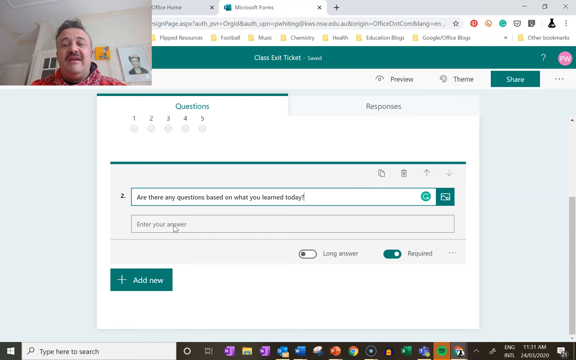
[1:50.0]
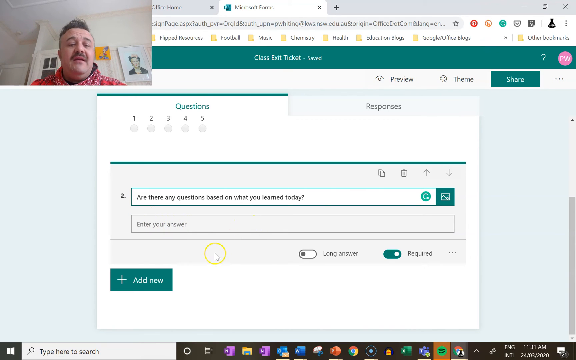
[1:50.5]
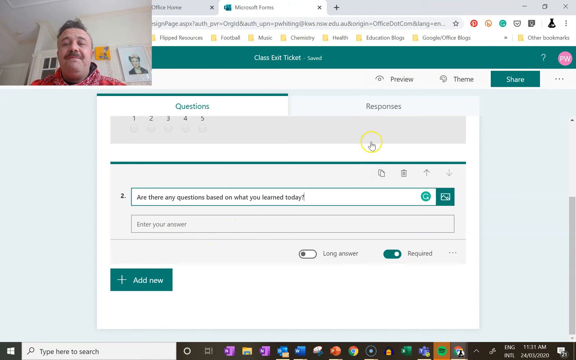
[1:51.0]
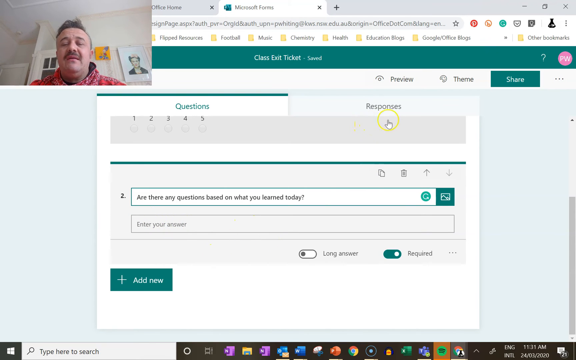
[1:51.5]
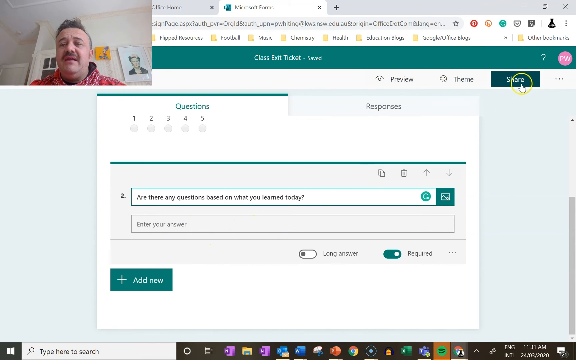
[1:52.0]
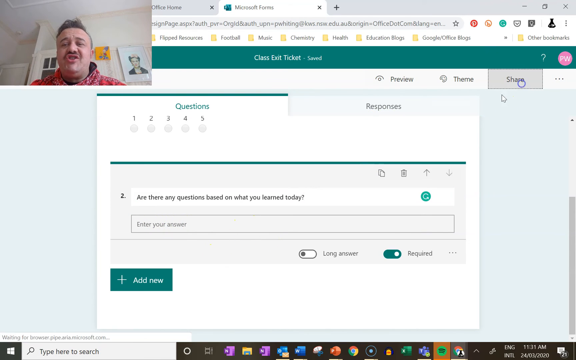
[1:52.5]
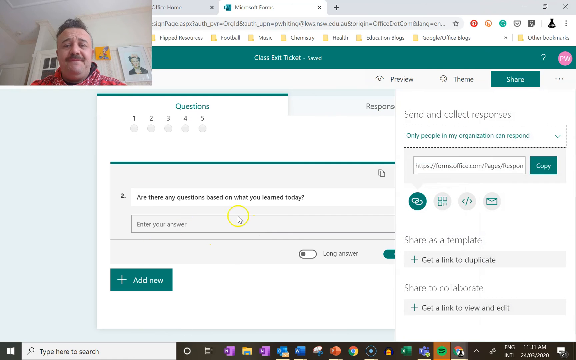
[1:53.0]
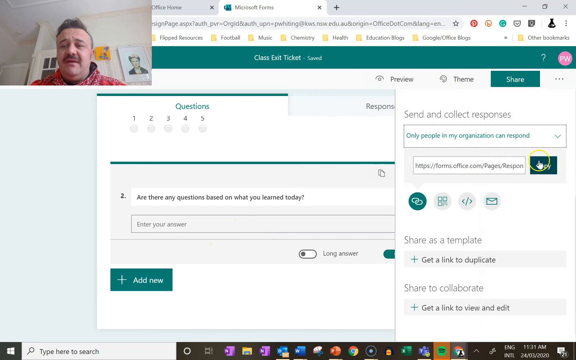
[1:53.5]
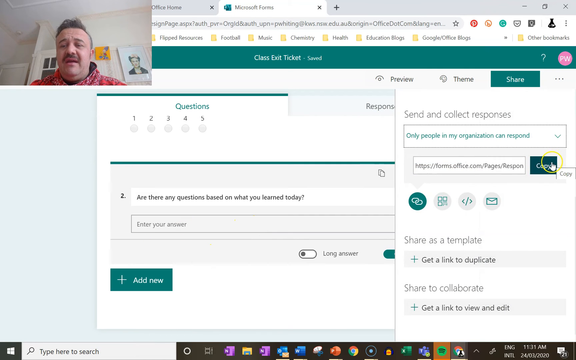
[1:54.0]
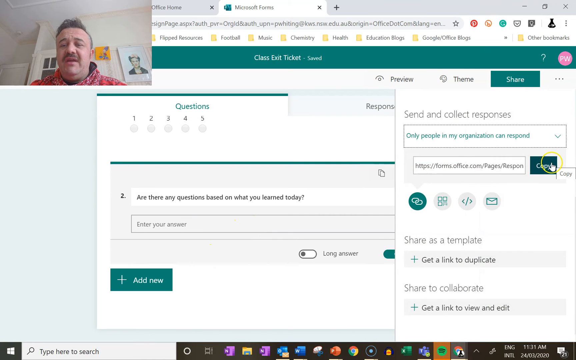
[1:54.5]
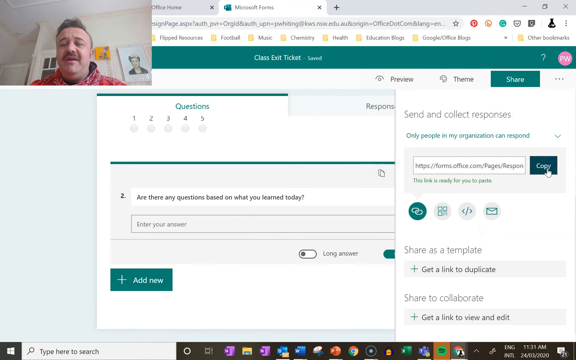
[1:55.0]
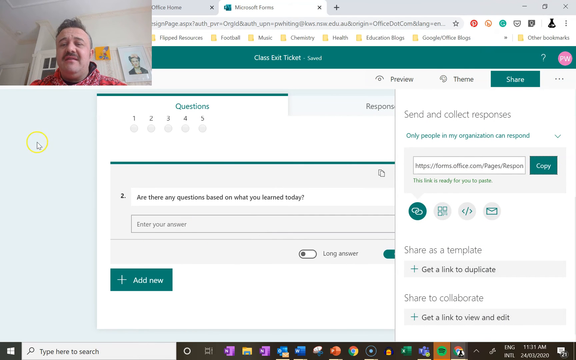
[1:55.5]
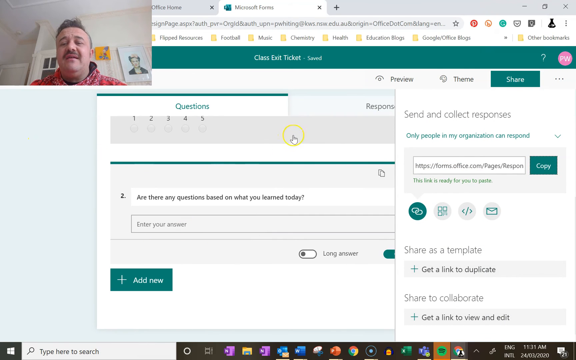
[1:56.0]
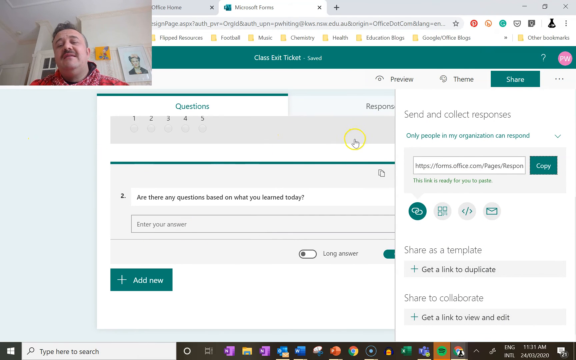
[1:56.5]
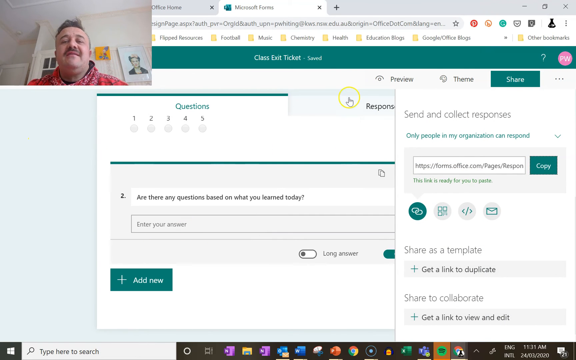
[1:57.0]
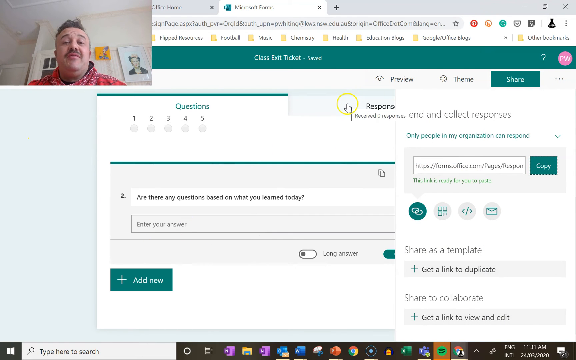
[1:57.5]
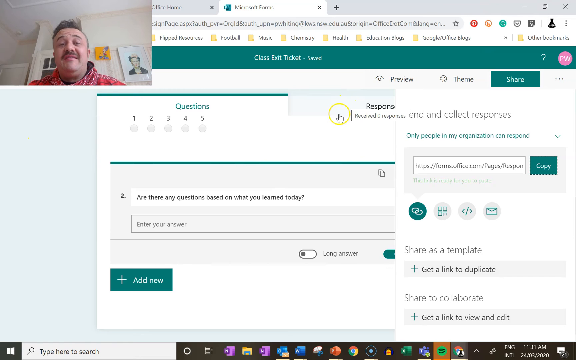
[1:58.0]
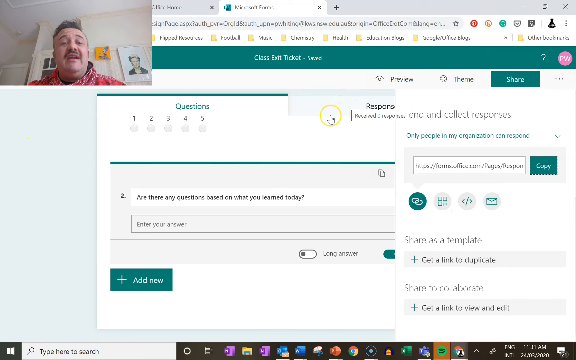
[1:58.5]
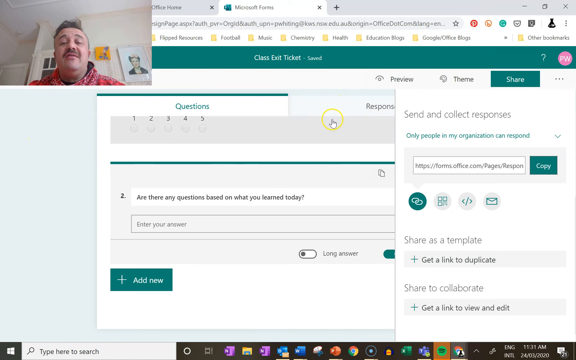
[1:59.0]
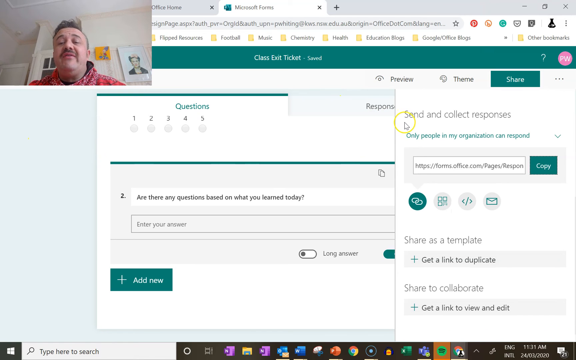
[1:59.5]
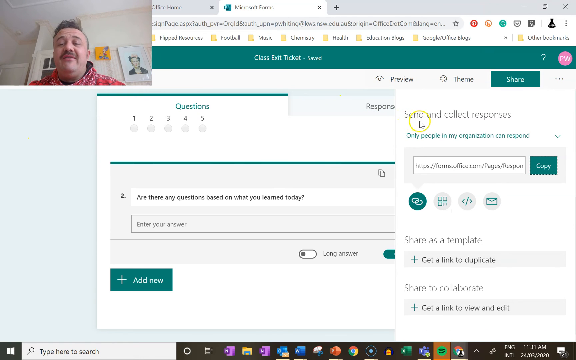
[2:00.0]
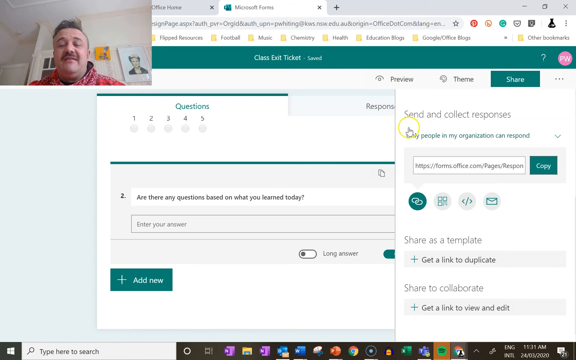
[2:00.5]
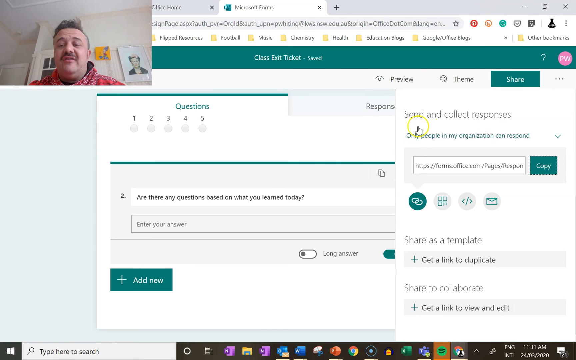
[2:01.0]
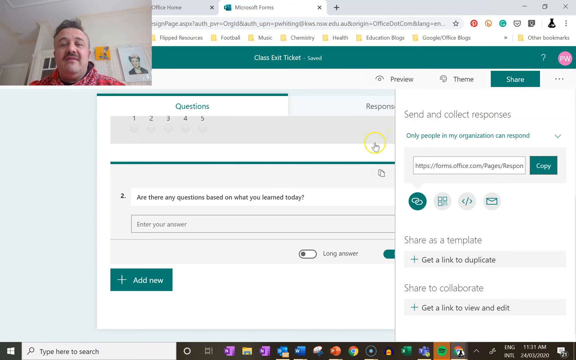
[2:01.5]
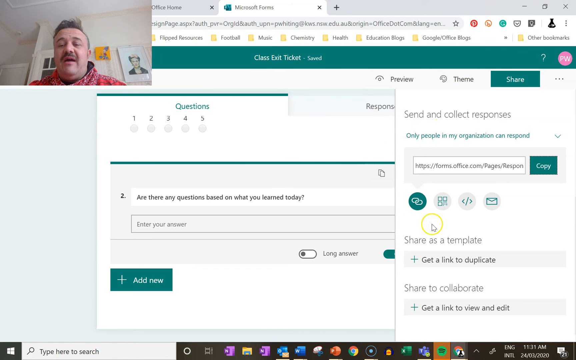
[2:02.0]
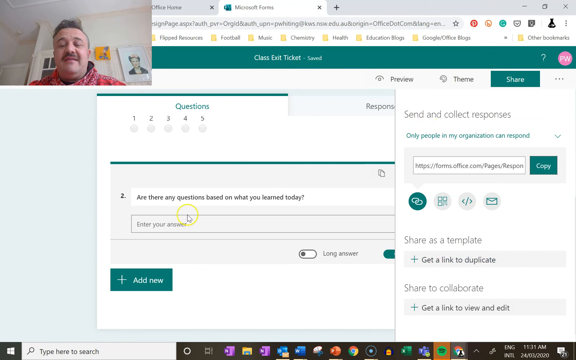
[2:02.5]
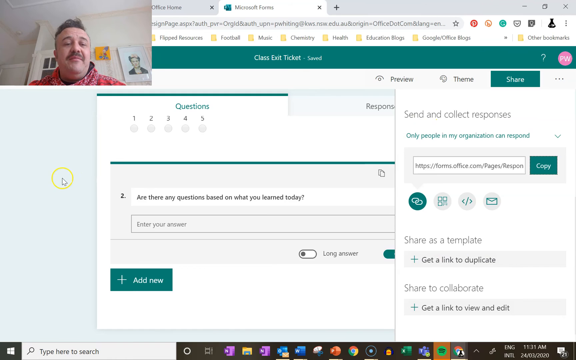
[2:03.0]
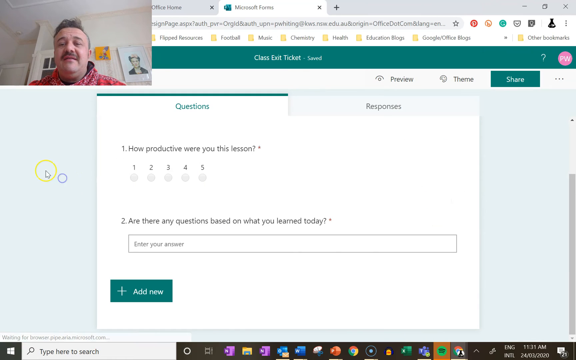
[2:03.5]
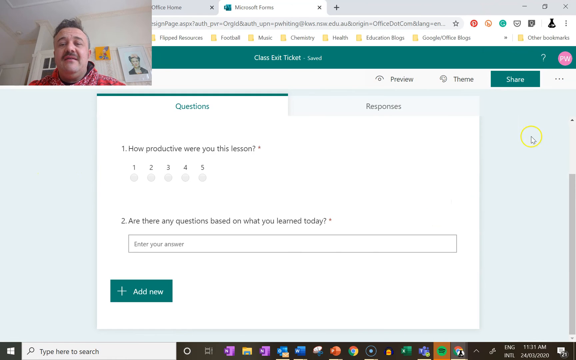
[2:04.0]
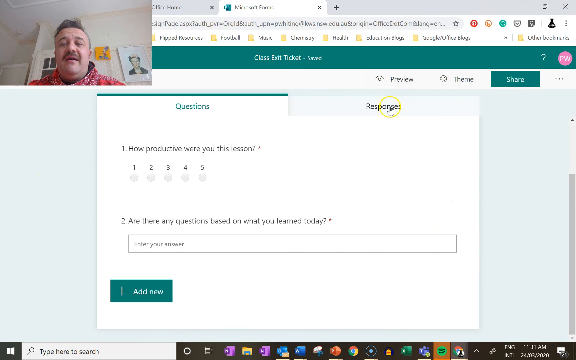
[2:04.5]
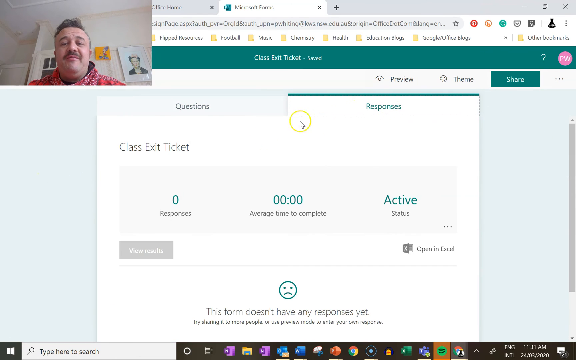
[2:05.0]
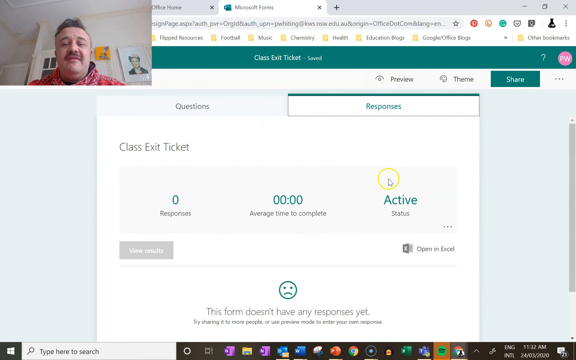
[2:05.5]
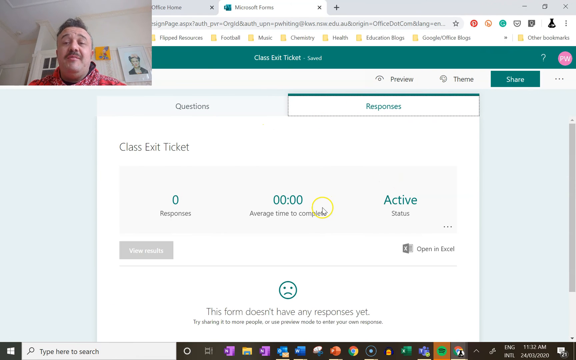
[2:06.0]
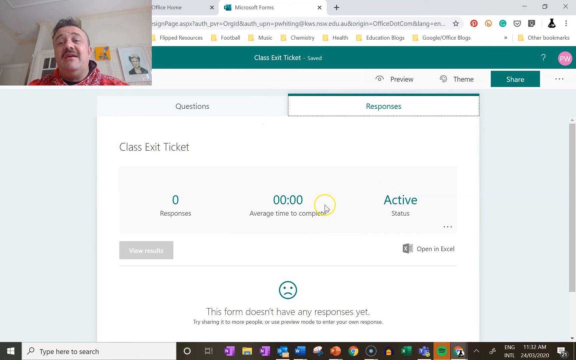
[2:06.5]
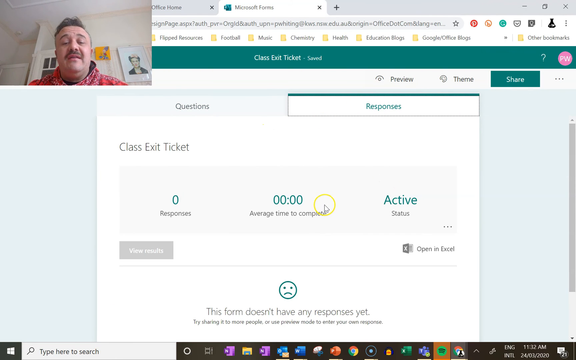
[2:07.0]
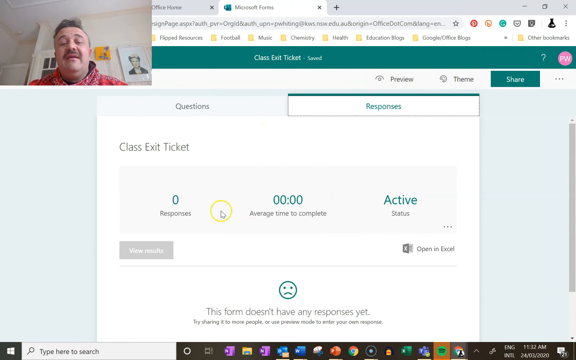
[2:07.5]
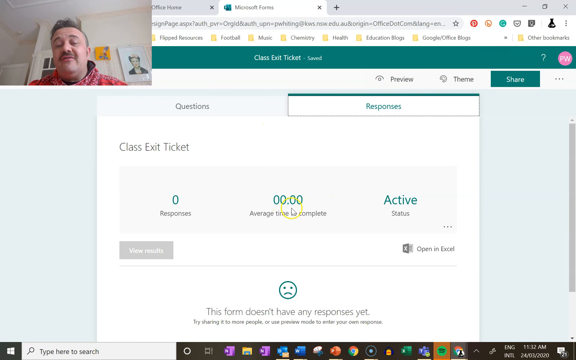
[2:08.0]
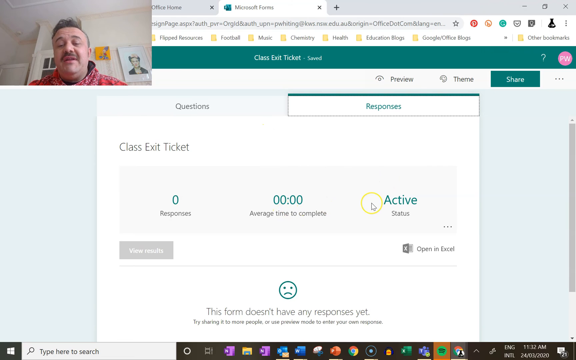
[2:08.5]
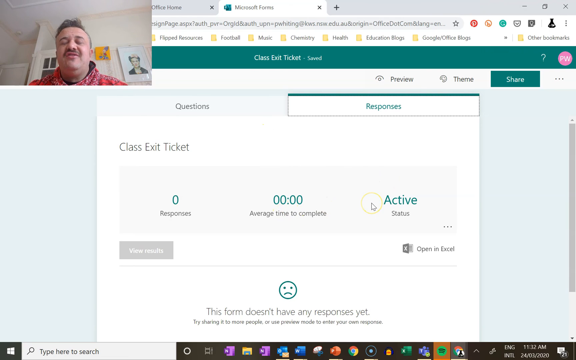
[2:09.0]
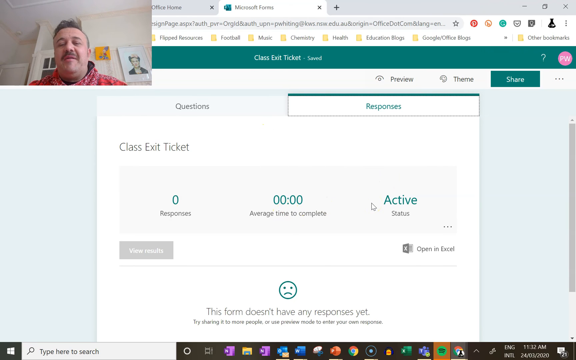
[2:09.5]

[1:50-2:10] A man teaches something on a computer screen, using a cursor that is a white and yellow circle with an arrow in the middle to highlight different areas. He clicks on "share", then on "copy", then moves the cursor to "send and collect responses" and clicks on "responses", which shows "zero responses" and a status of "active". There is an area where a person can input a question, and there are five sections at the top. The text reads "are there any questions based on what you learned today?", and the yellow cursor is in the bottom section where it says "enter your answer". At the very bottom there is a plus sign and a button that says "add now".